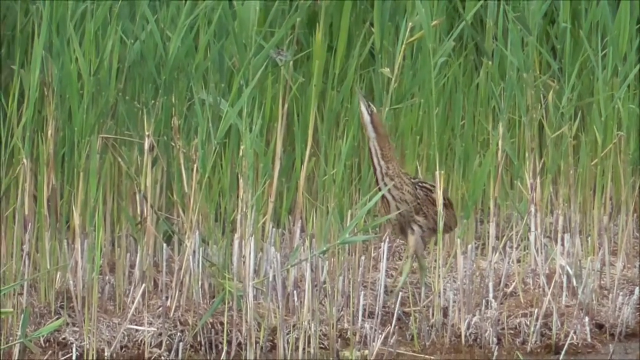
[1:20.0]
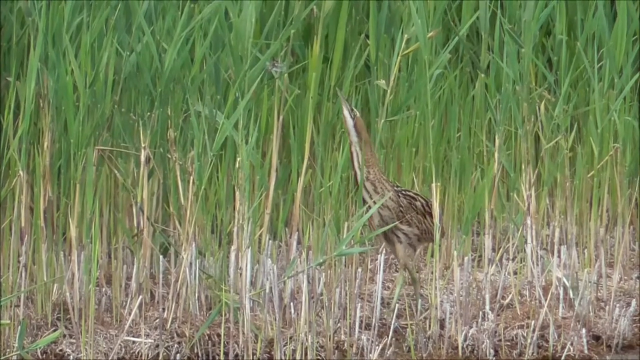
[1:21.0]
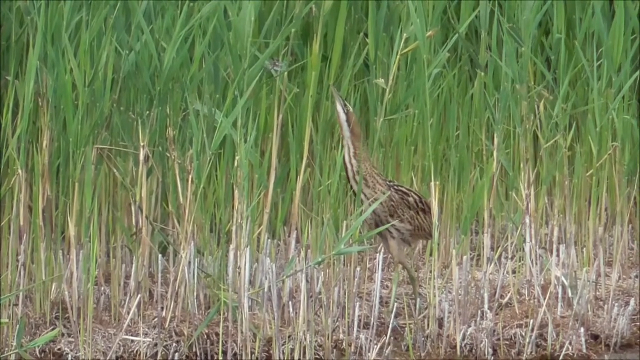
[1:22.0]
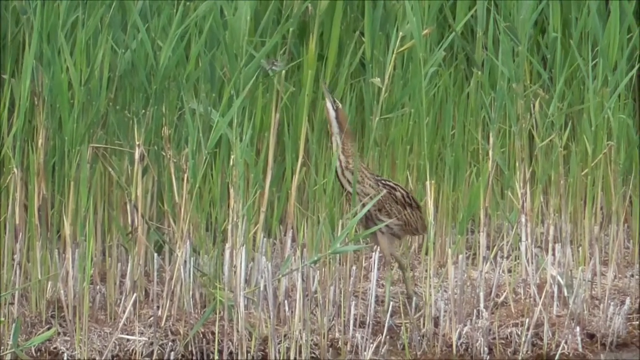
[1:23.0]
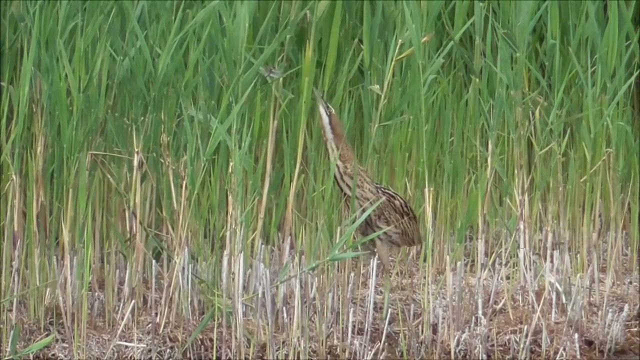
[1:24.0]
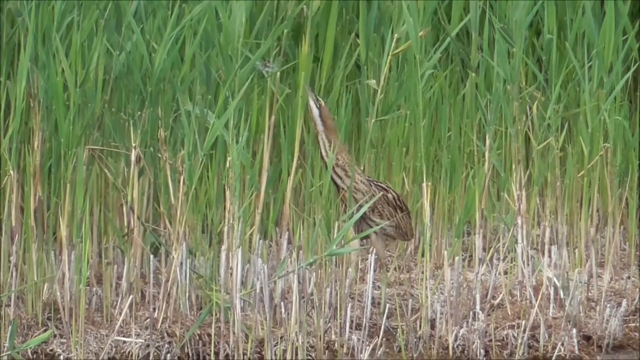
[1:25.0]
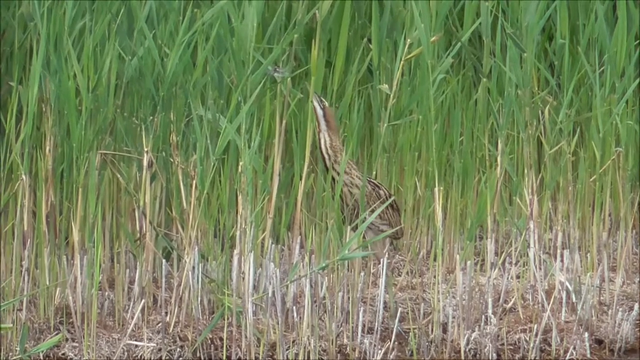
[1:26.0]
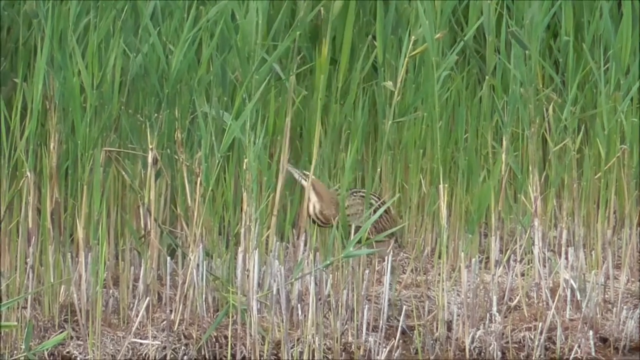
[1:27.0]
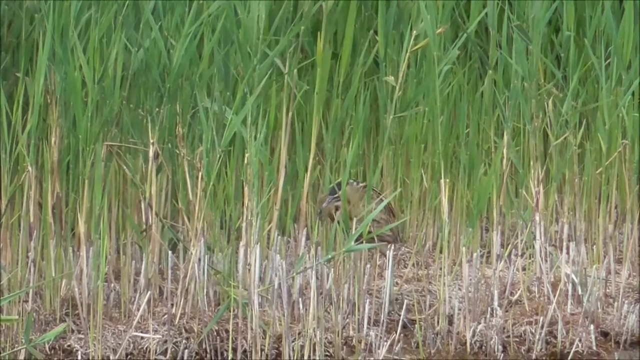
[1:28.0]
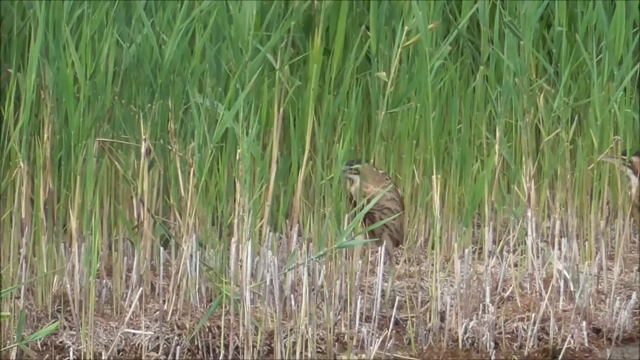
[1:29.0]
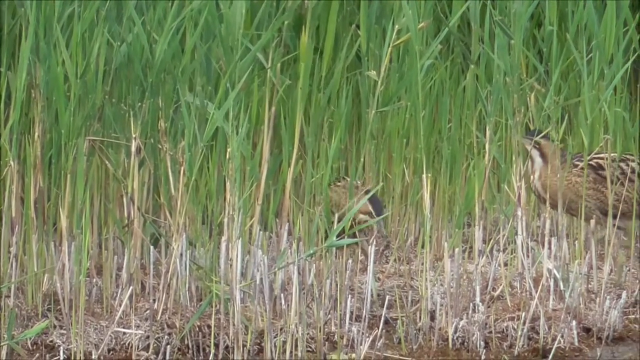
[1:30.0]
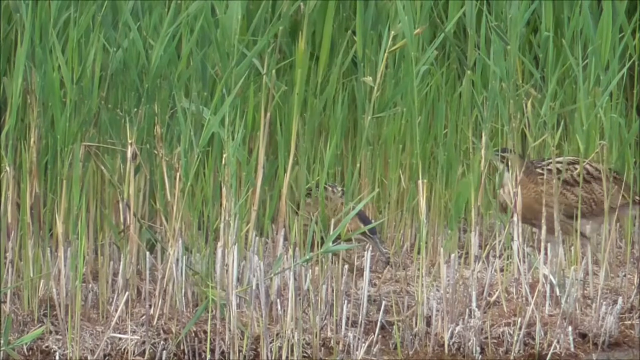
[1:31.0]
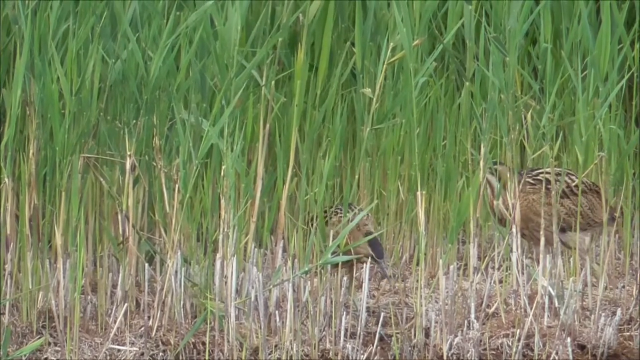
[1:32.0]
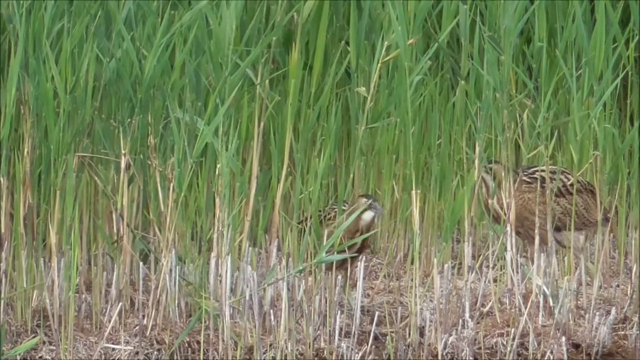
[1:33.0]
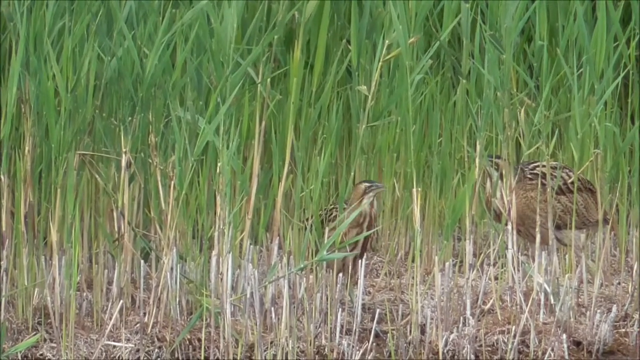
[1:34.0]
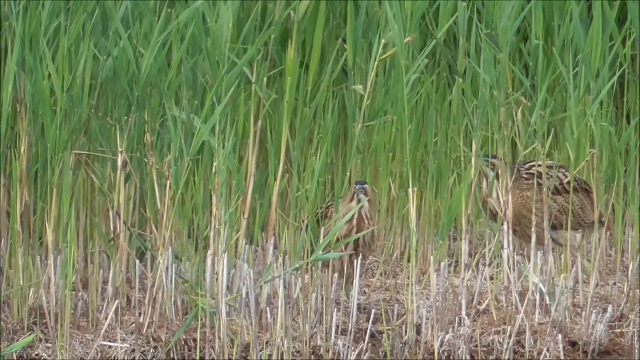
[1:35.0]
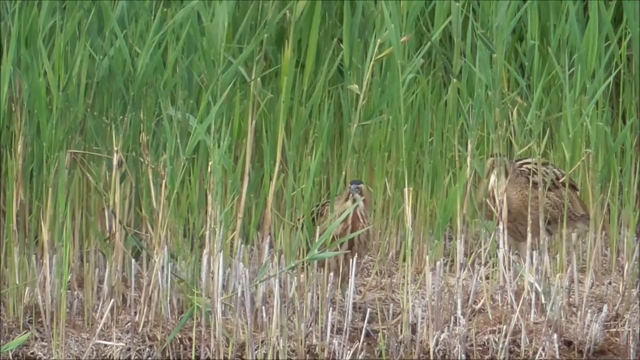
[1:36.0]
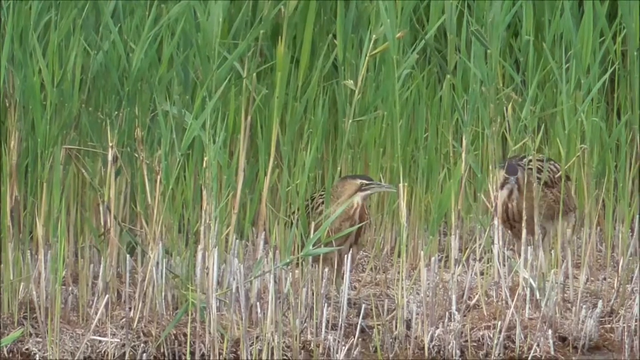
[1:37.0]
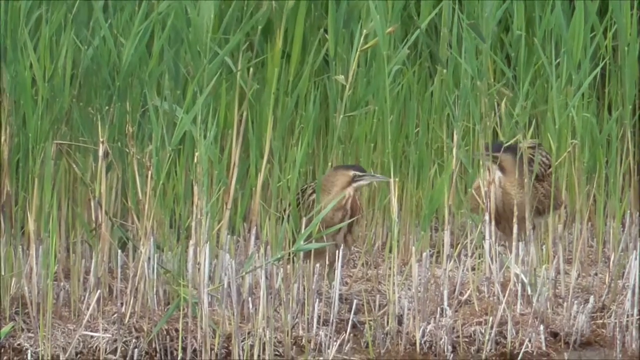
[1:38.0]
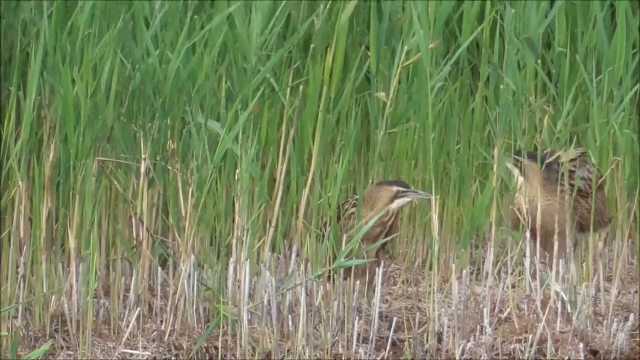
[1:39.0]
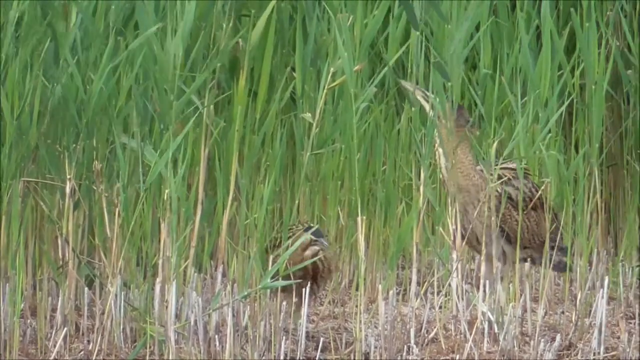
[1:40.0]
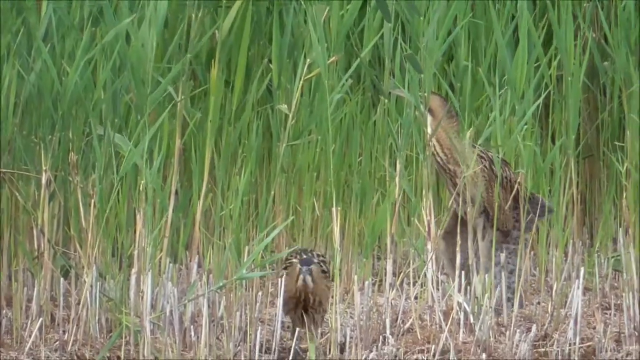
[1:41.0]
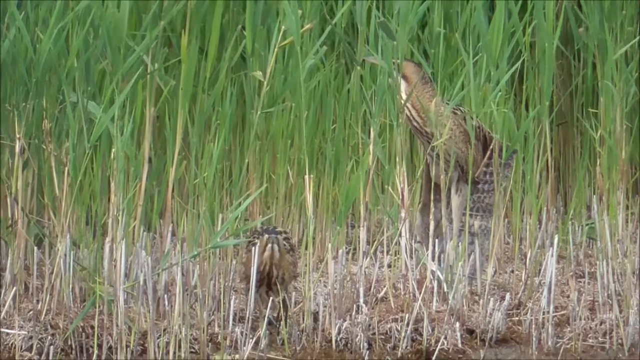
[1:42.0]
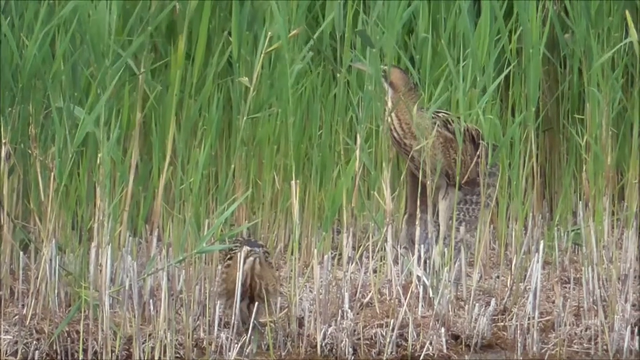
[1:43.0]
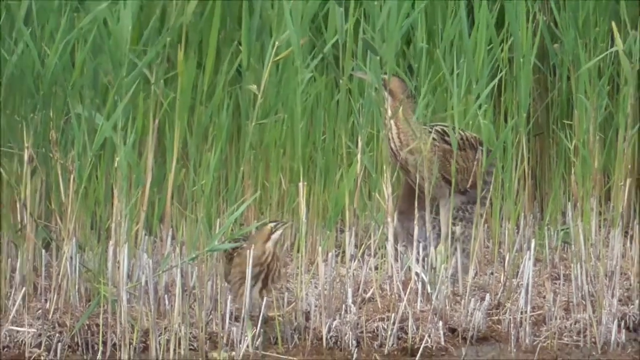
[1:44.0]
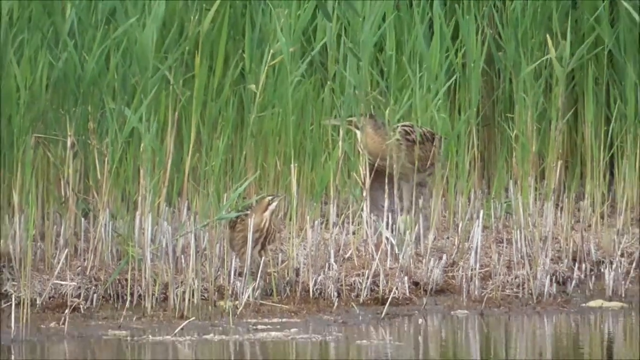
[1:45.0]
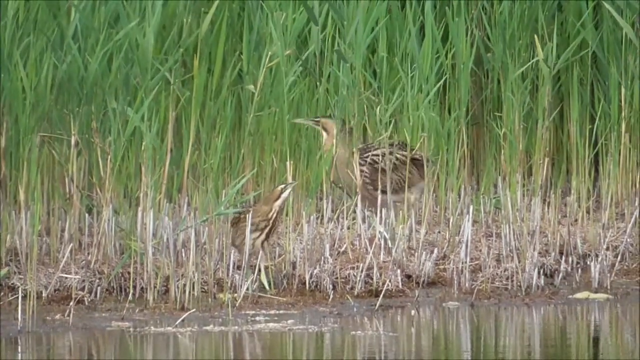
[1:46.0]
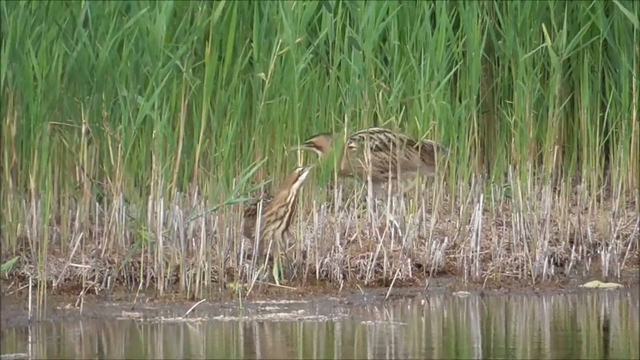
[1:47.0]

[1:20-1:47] For a good chunk of time, the bird almost seems to be deciding whether to grab the insect. Its head goes ever so slightly back and forth, and its neck and head are super stretched out upward toward what is apparently a bug on one of the plant stalks. It then tries to grab the bug and apparently succeeds, since what looked like a dragonfly sitting on the stalk is no longer visible. Once it grabs it, its neck goes back down to normal length. Whatever it caught is at the end of its beak, and it sort of opens and closes its beak as if working the insect down into its throat. At this point, the other bird walks in from the right-hand side and kind of watches the first bird eat. The bird on the right then stretches out and raises its head, maybe seeing something; the feathers on its wings spread out and its legs stand all the way up. Then it kind of goes back down, not quite as stretched out, while the other bird keeps eating the dragonfly it caught.